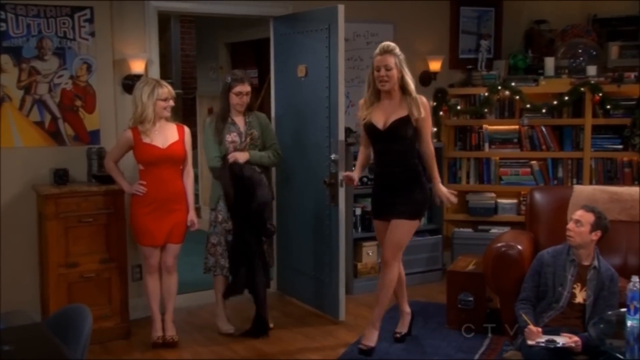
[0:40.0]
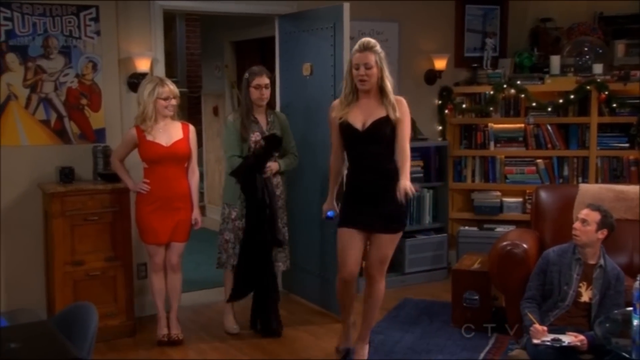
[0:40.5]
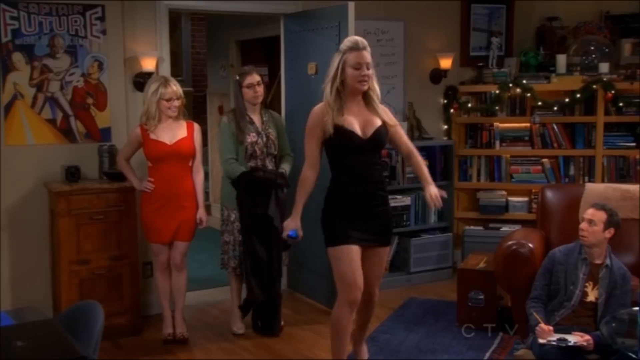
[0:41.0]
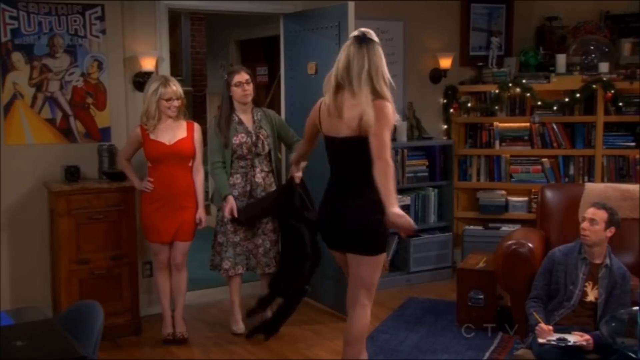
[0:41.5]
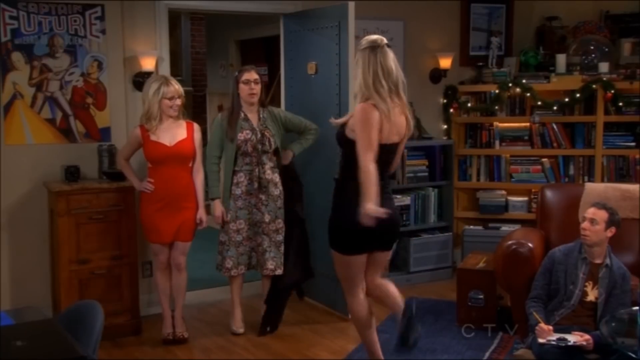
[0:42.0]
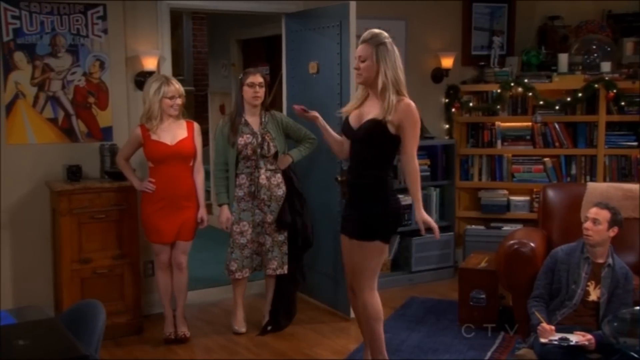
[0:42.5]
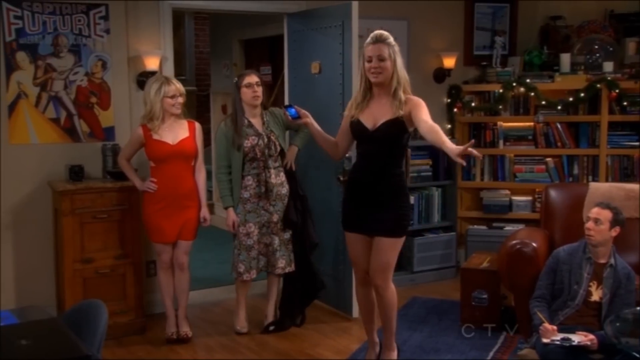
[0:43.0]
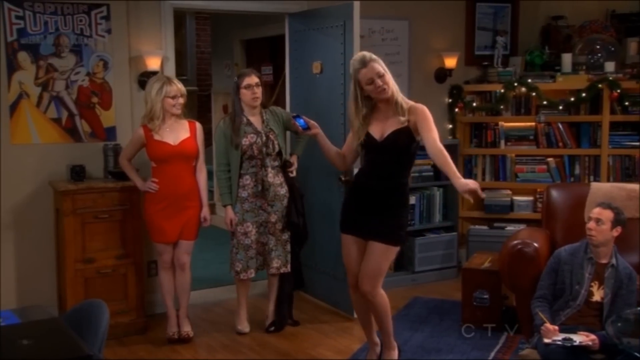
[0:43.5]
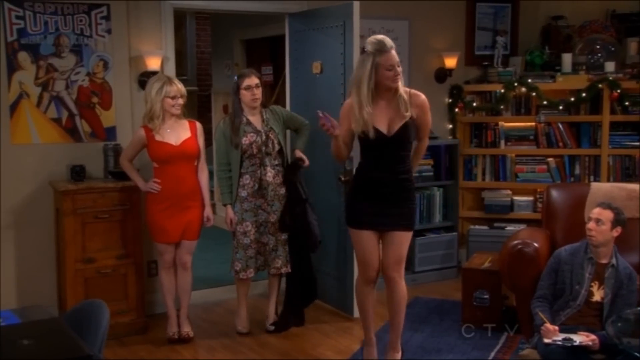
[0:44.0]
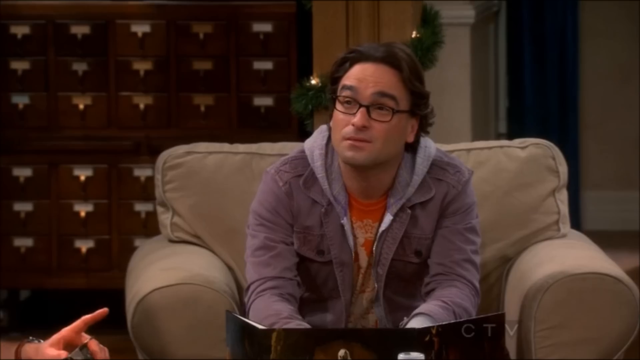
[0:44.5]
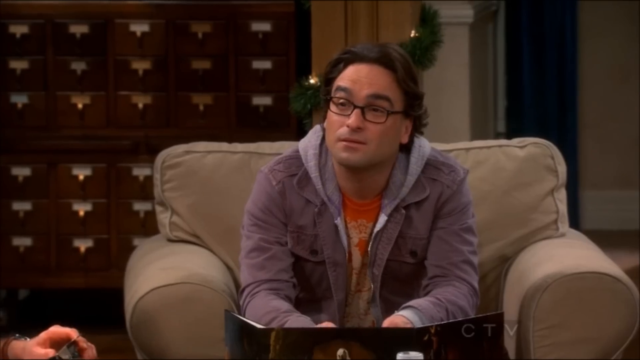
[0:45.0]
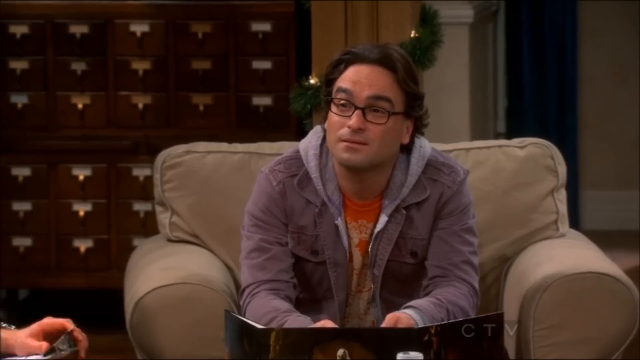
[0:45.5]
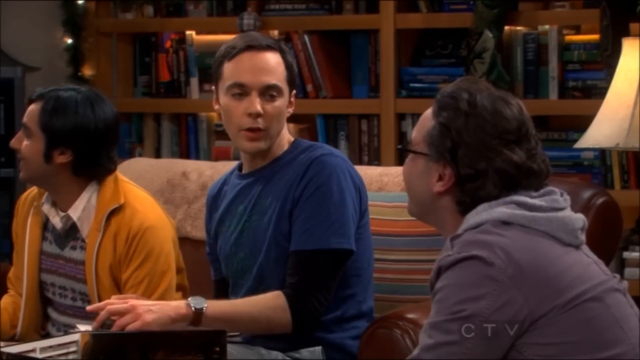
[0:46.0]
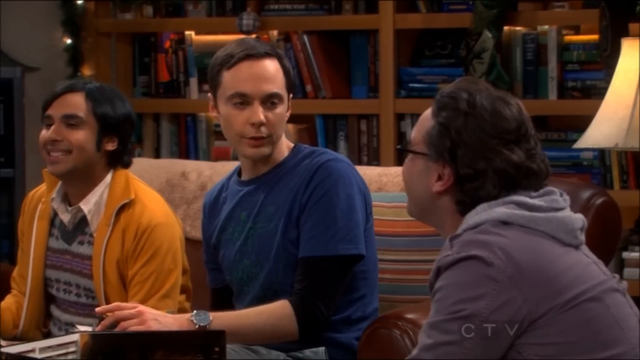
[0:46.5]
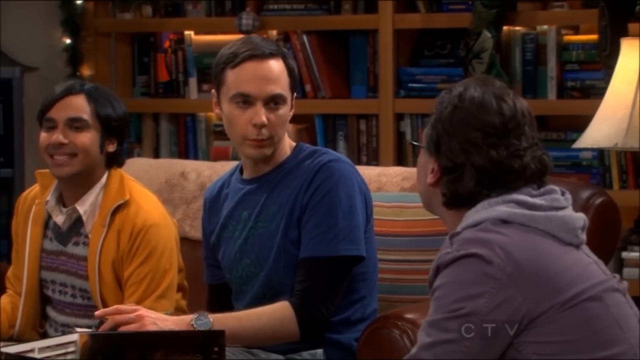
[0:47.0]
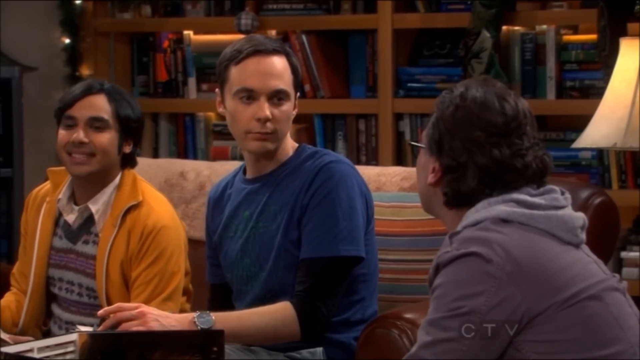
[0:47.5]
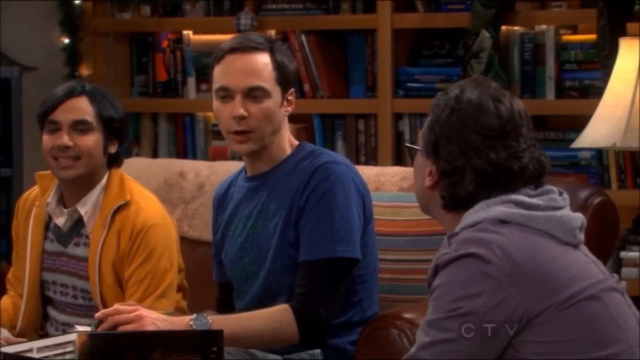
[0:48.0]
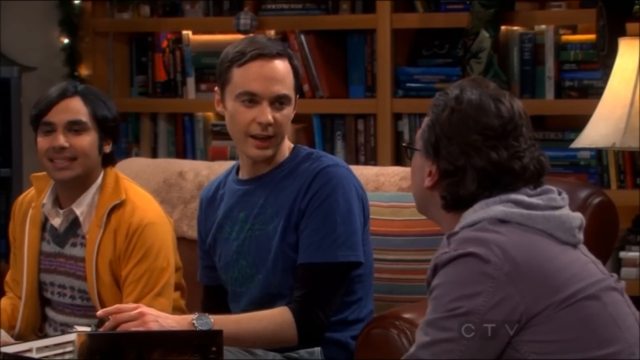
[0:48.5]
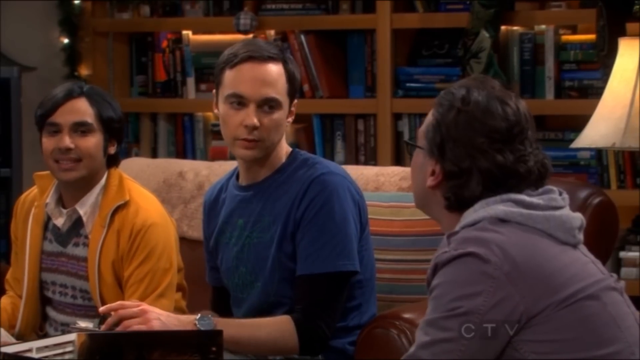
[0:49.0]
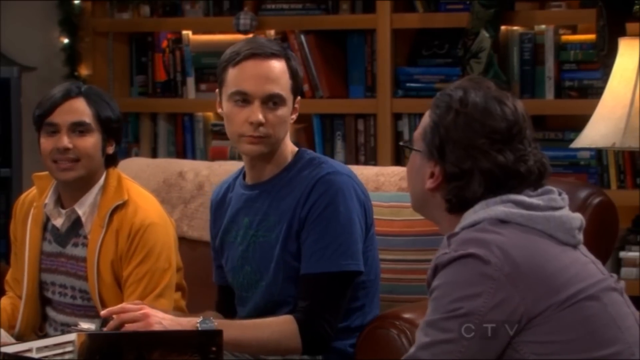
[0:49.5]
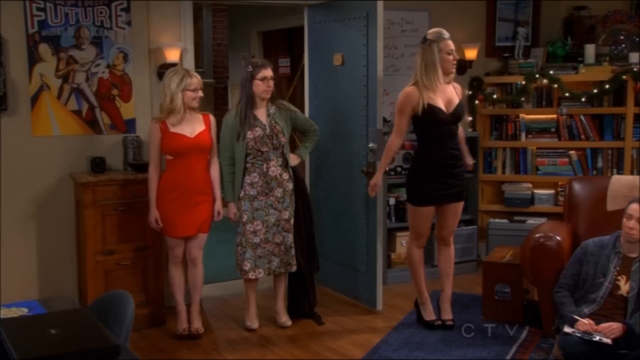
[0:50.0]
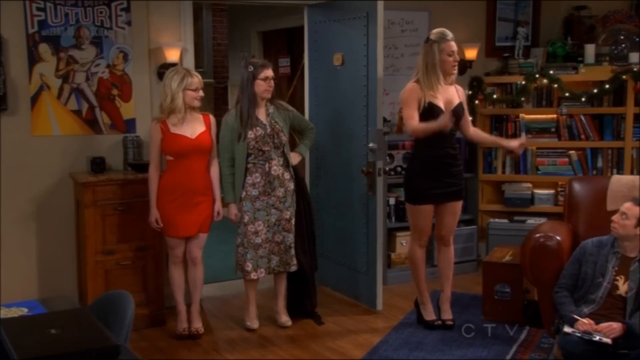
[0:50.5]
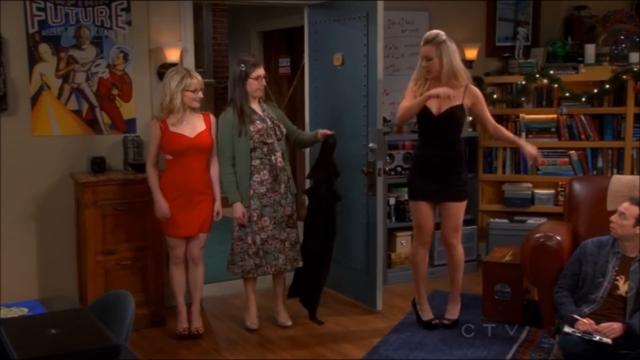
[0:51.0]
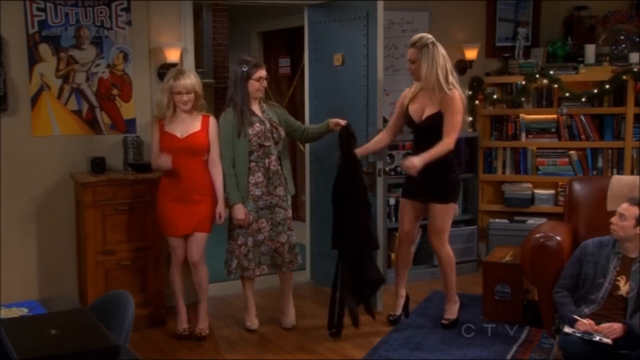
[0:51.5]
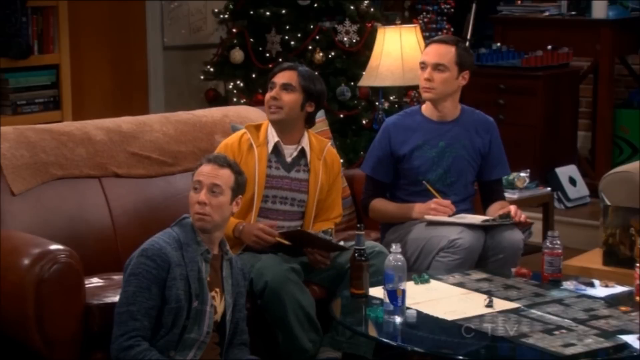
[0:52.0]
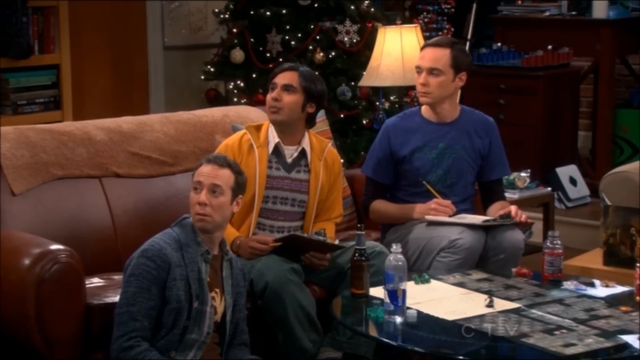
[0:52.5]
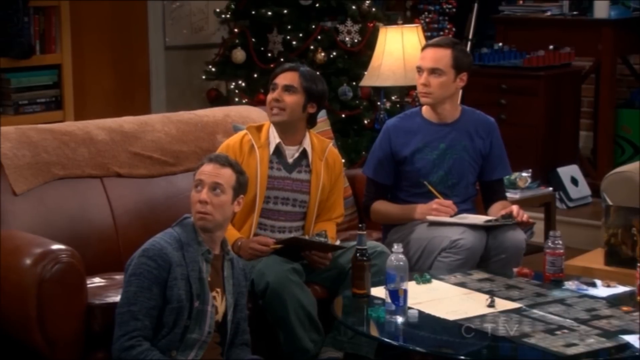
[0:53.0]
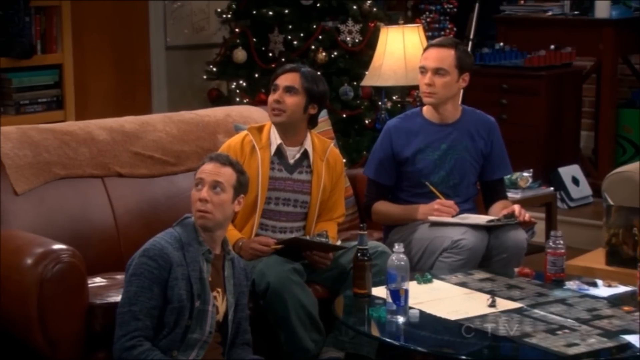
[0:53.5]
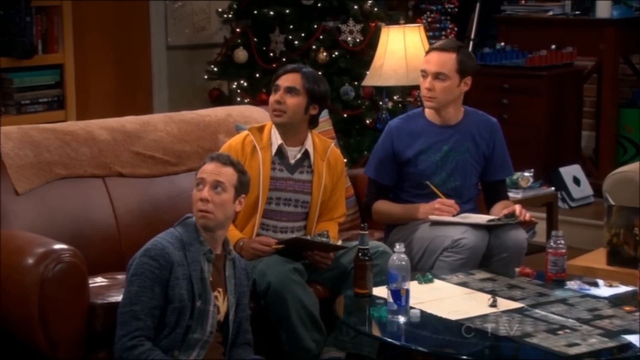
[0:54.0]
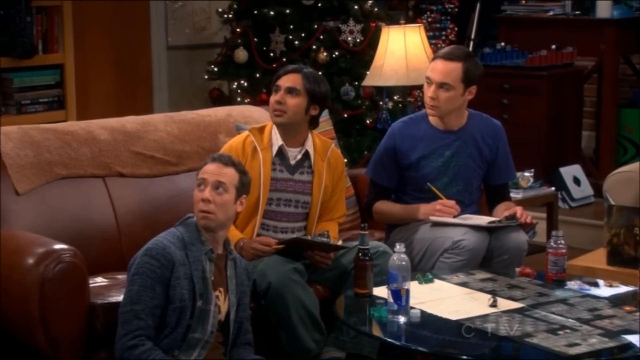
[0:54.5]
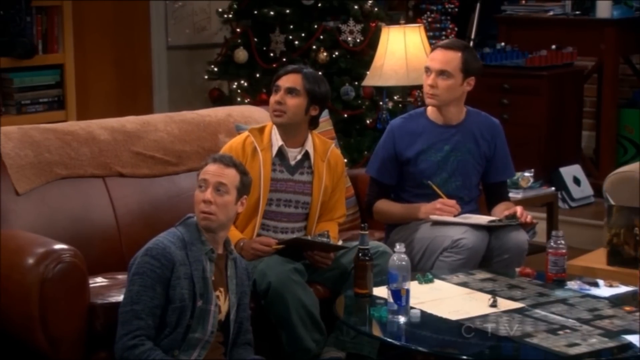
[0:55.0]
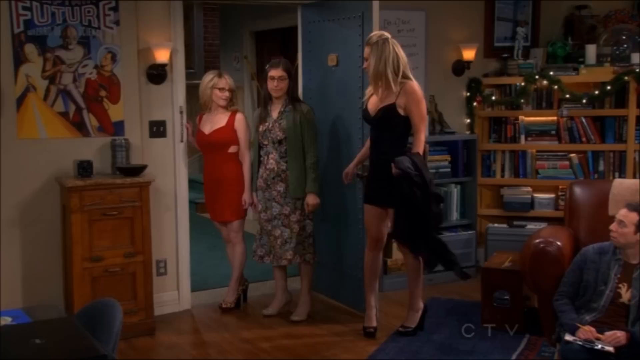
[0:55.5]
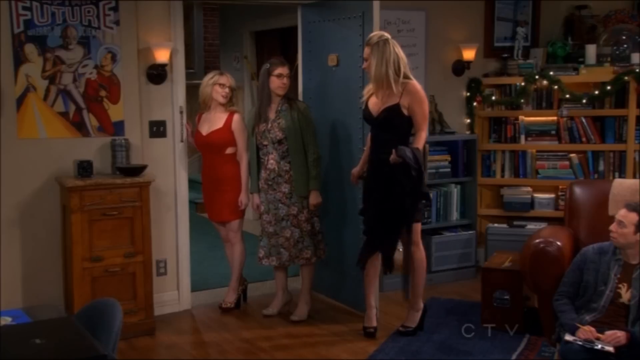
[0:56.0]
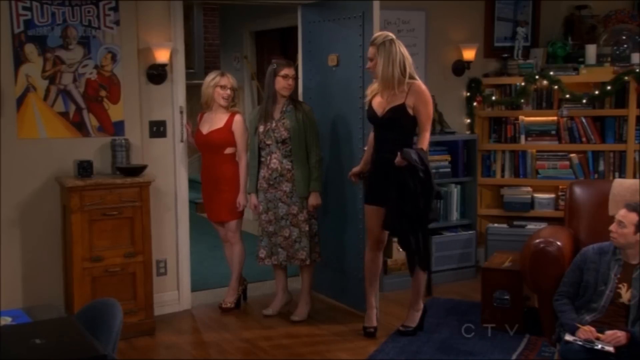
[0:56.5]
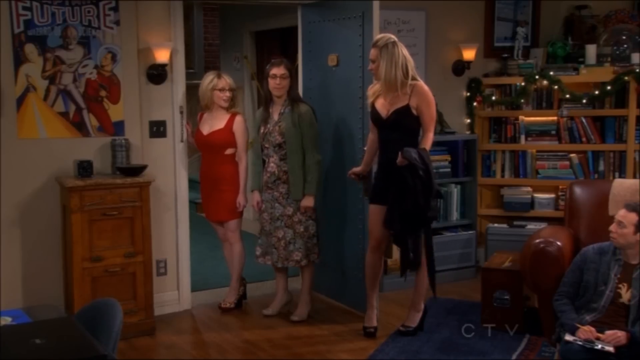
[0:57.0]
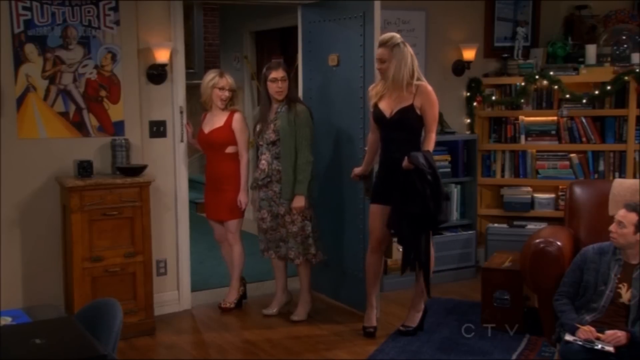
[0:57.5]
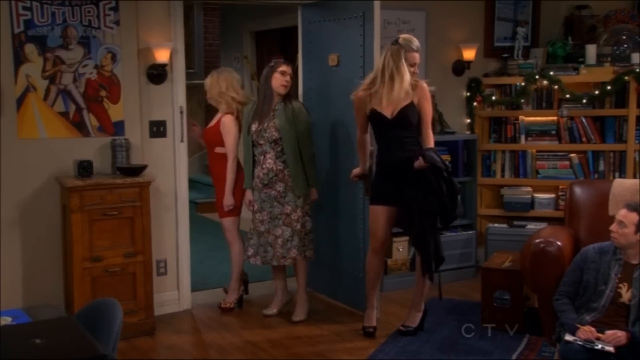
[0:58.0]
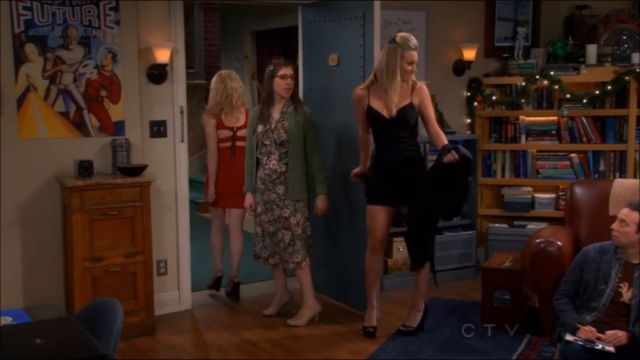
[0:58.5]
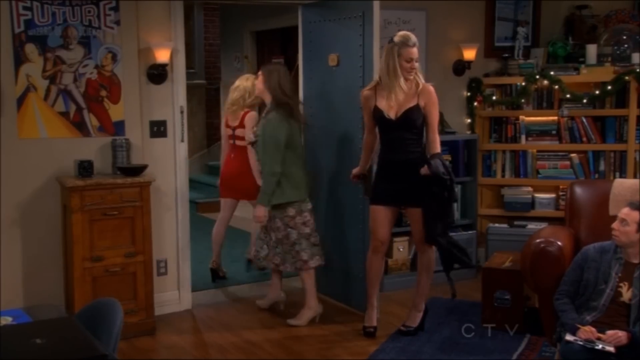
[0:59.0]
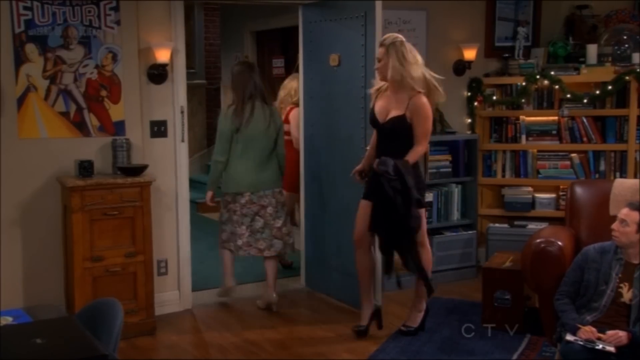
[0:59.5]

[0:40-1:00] A woman in a short red dress stands in the doorway with her right hand on her hip. To her left is a set of wooden drawers, with a poster above them saying "Captain Future" and a drawing of a robot and a man in a red space suit. To her right is a woman in a green cardigan and flowery dress, holding a black coat and standing next to an open green door, with the hallway behind her. To the right of that, behind the door, is a woman in a very short black dress, with a bookcase of different books with lights on it behind her. To her right, a man in a blue jacket sits on the floor looking up at her. The woman in the black dress spins around, showing black high-heeled shoes; she kicks her right foot up towards her bum and places it back on the floor. The shot cuts to a man sitting on a chair with long hair and rectangular glasses, wearing a purple jacket over a grey hoodie and an orange t-shirt. Behind him are sets of drawers like those in a medical office. Next, the man on the couch in a blue top and long black-sleeved shirt turns to and talks to the man in the grey hoodie. The man in orange sits in the middle; he has long hair and is smiling. The shot cuts back to the three women in the doorway. The woman in black raises both arms and points to the men, then turns around to take her coat from the woman in the green cardigan. The three women turn to look at him. The woman in the red dress stands in the doorway, as does the woman in the green cardigan, and they start to leave the room.